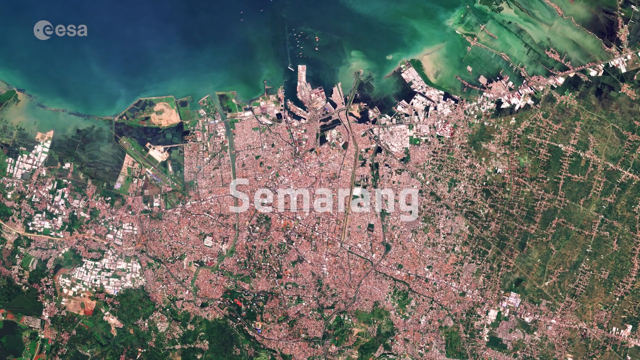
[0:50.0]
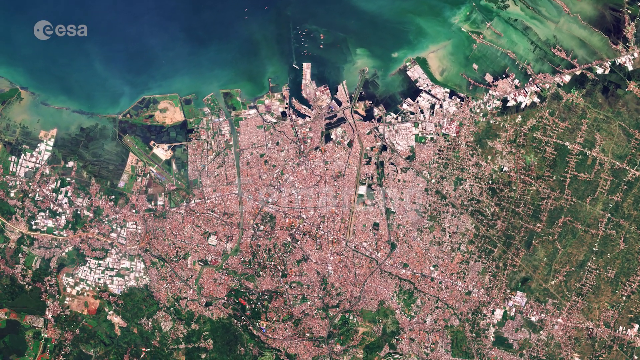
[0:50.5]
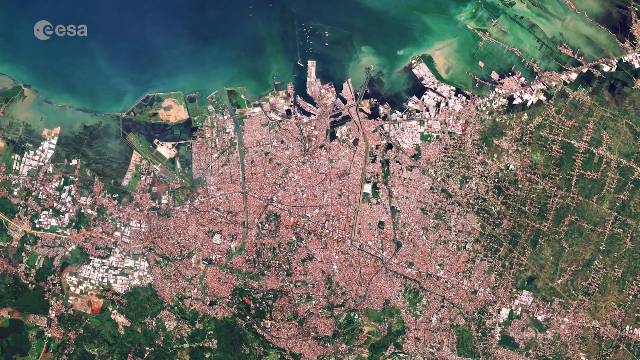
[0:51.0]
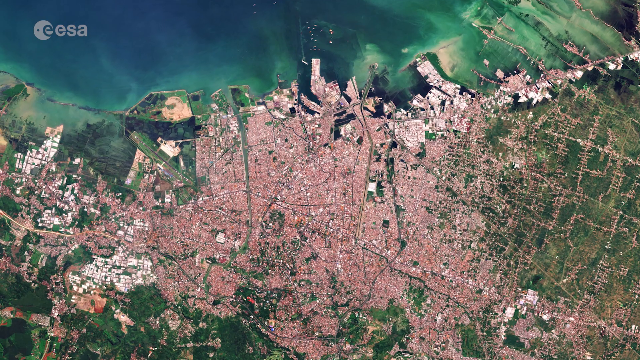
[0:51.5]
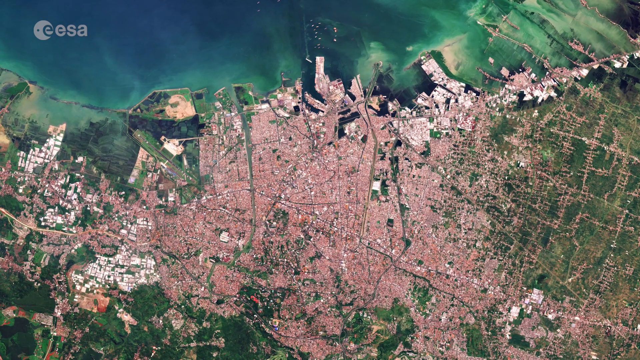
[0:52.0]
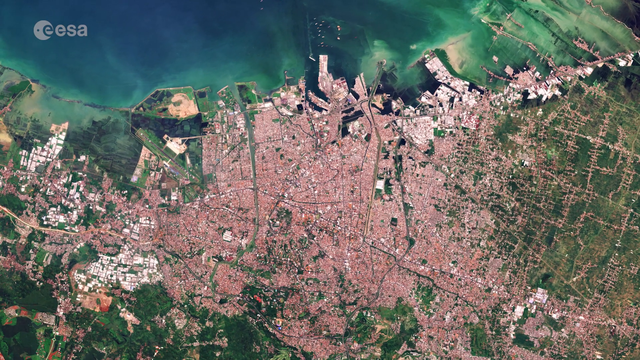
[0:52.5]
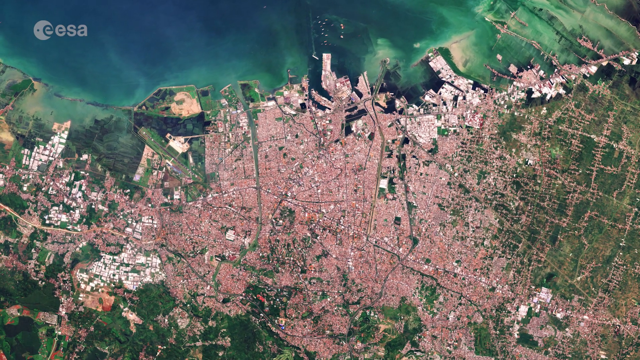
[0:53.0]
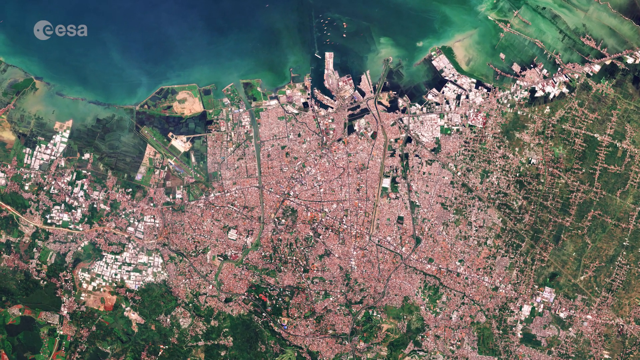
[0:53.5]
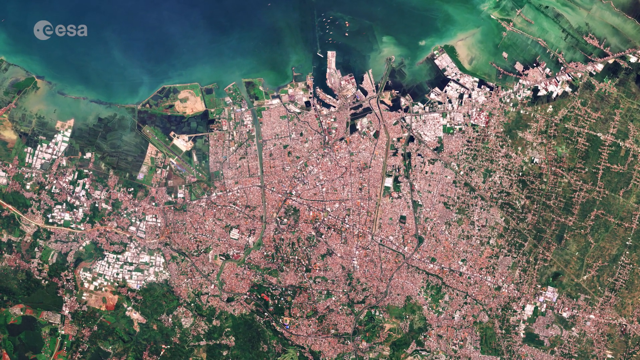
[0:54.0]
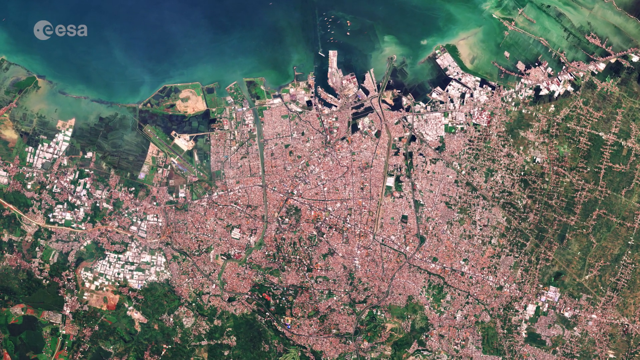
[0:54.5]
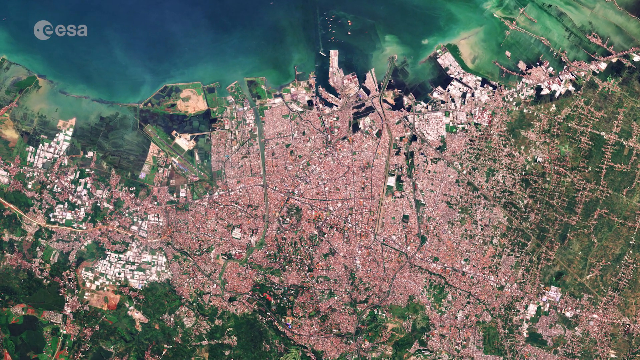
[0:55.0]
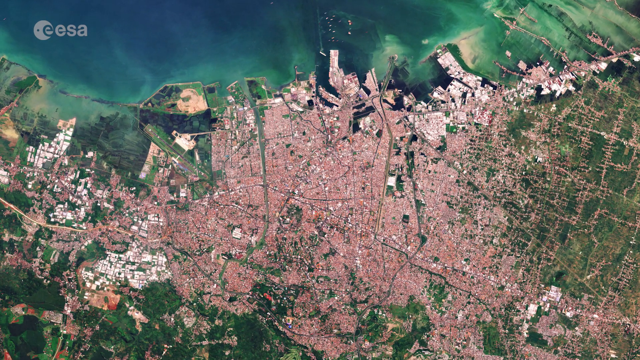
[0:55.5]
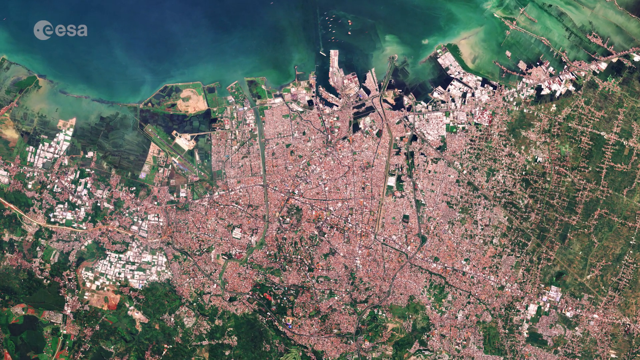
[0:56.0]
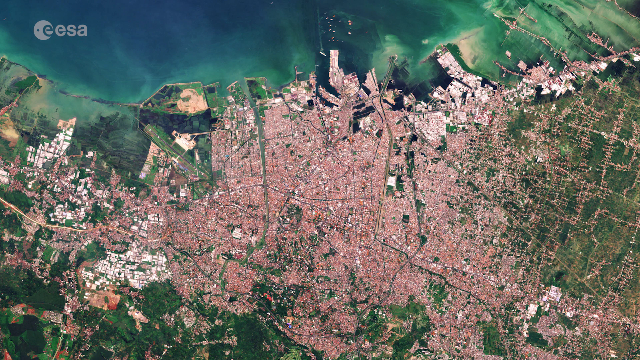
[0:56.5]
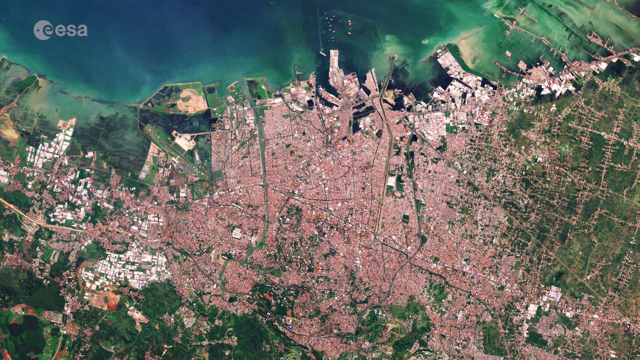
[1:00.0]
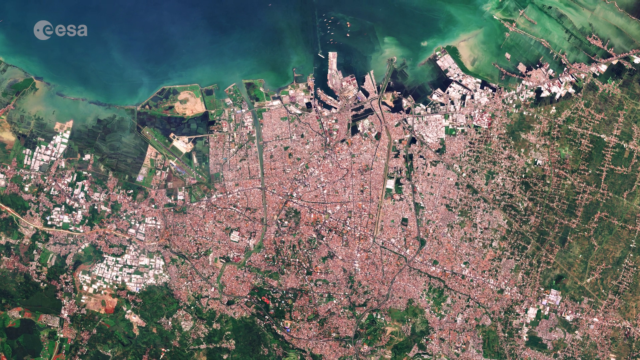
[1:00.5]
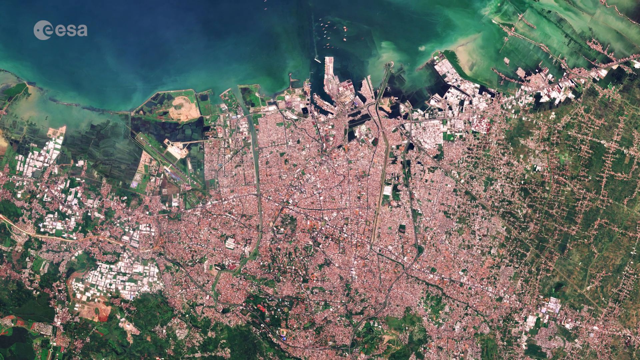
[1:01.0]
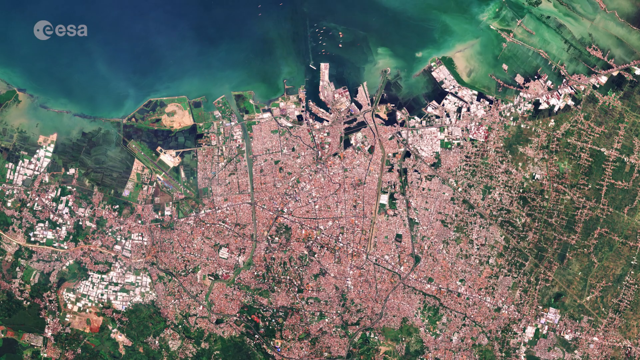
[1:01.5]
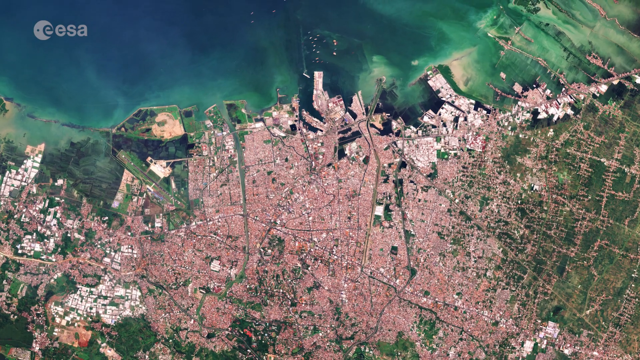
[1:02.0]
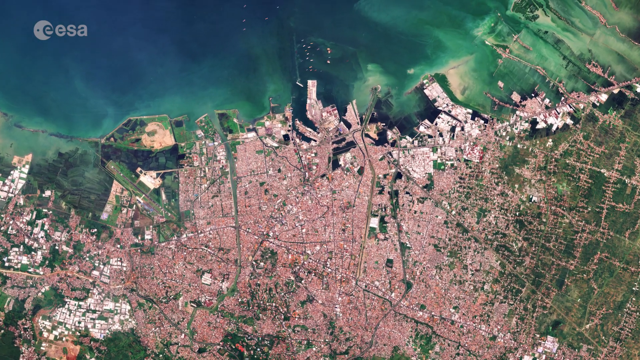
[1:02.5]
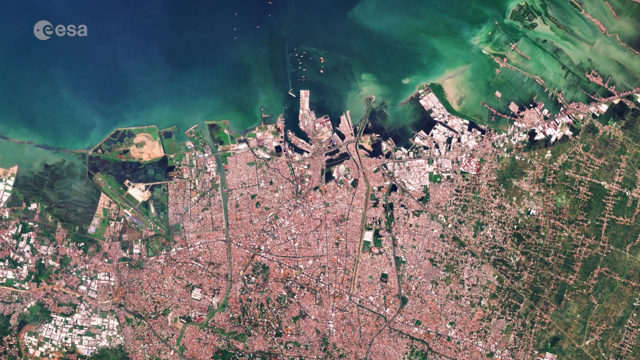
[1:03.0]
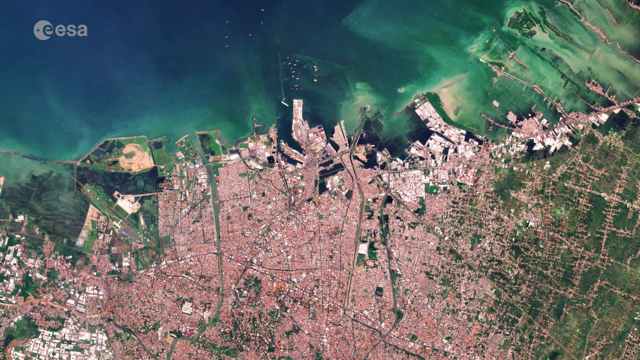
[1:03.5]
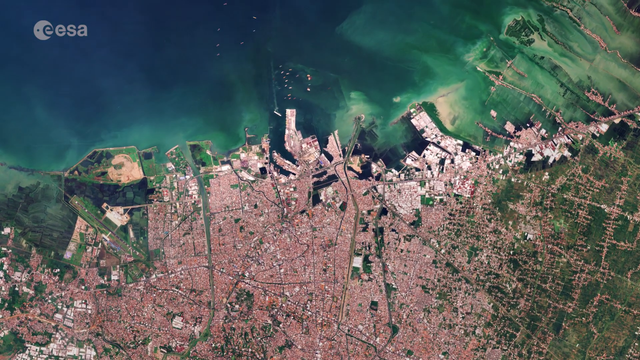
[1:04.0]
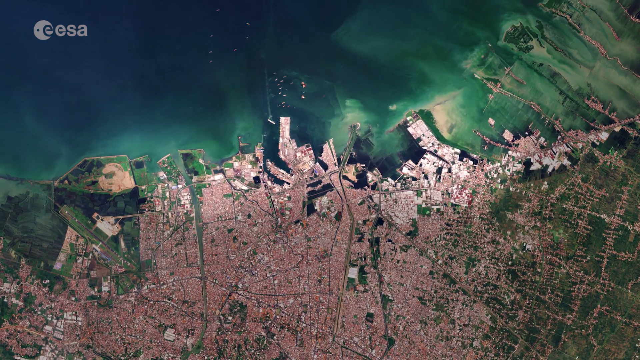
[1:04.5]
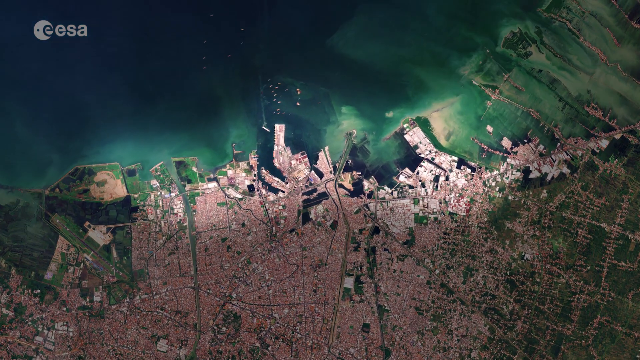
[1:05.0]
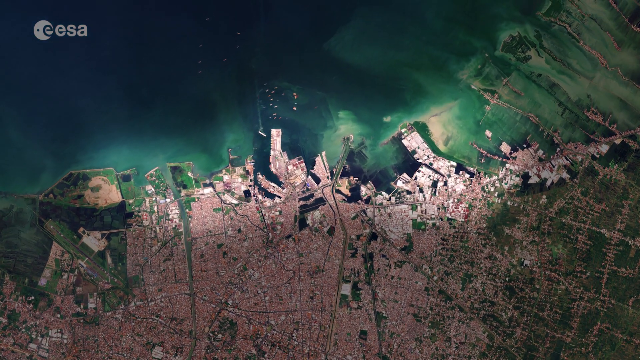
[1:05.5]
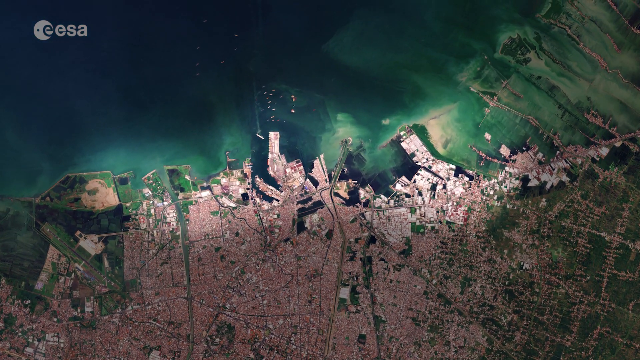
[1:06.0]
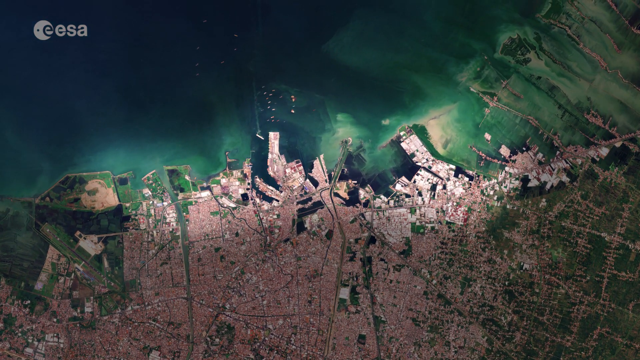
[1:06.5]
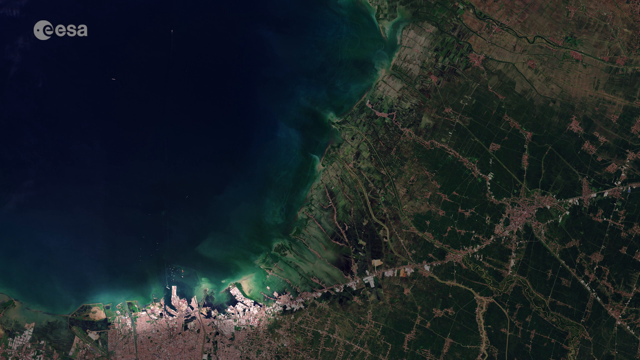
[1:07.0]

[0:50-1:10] The view zooms in on the city of Semarang, shown as a brown area. Above it is a blue-green area representing water, and to the sides of the brown area is green, with many lines indicating the subdivisions of the city. The view zooms in a little closer on a tiny sliver of land that is part of the brown undeveloped land mass and the green and blue area of the water. Semarang lies right along the edge of this body of water, with an irregular, not straight outline of land next to the water. To the side are fields and lines marking different plots and developments of land in the area.